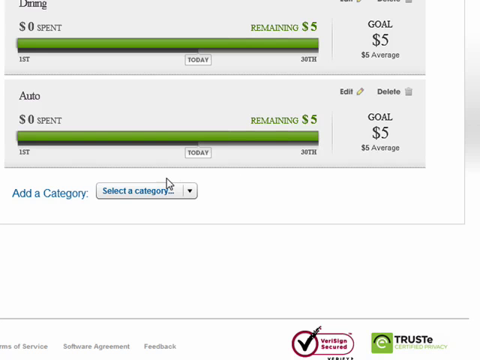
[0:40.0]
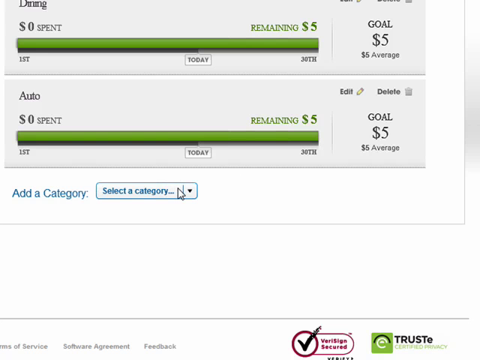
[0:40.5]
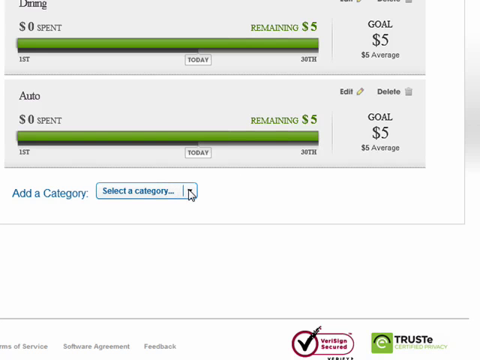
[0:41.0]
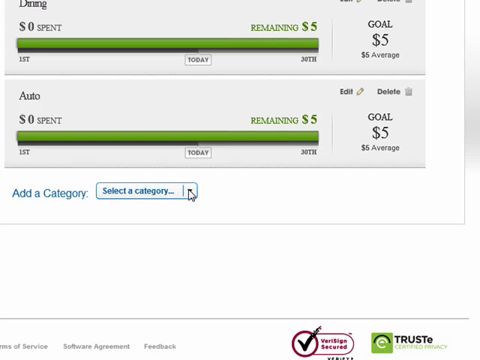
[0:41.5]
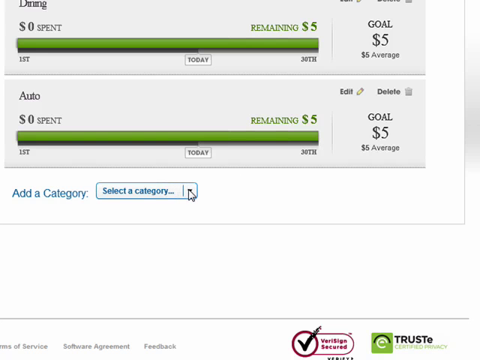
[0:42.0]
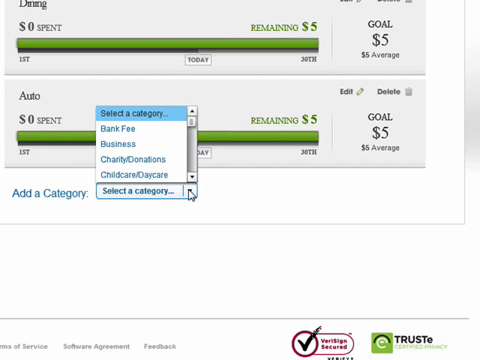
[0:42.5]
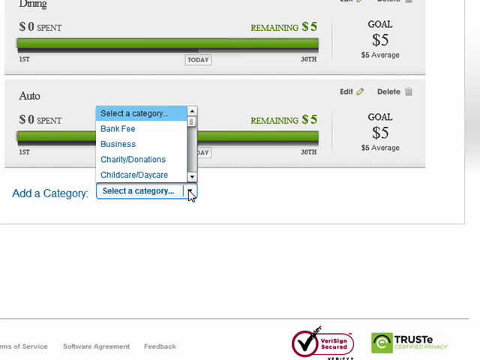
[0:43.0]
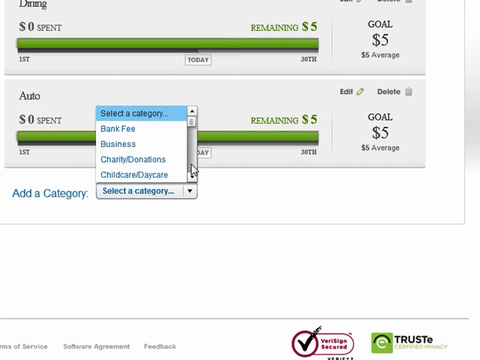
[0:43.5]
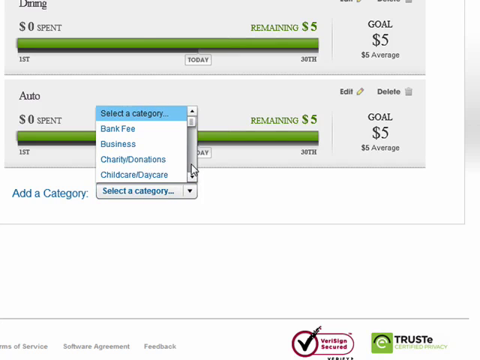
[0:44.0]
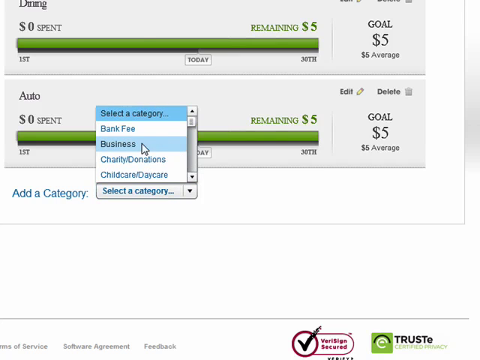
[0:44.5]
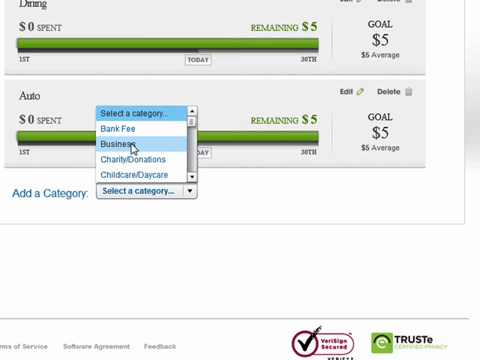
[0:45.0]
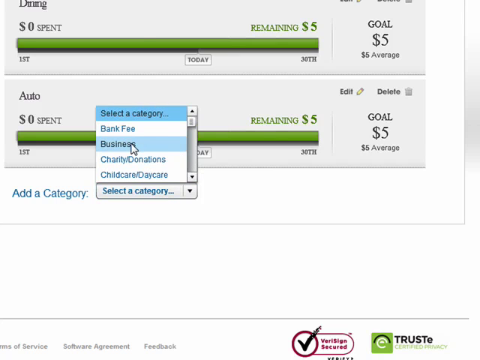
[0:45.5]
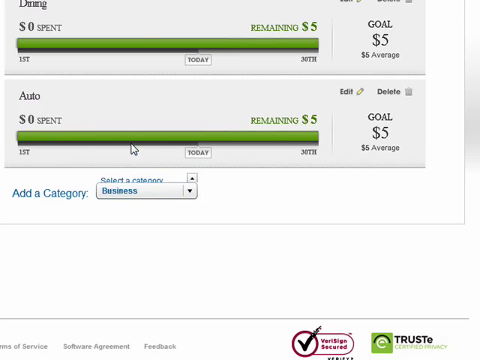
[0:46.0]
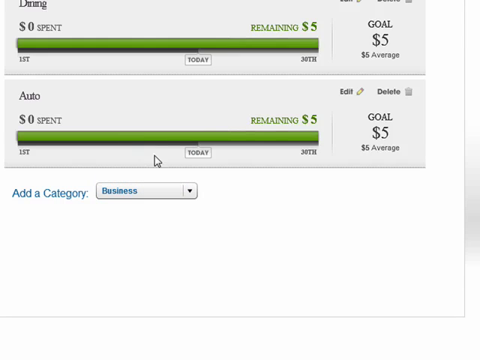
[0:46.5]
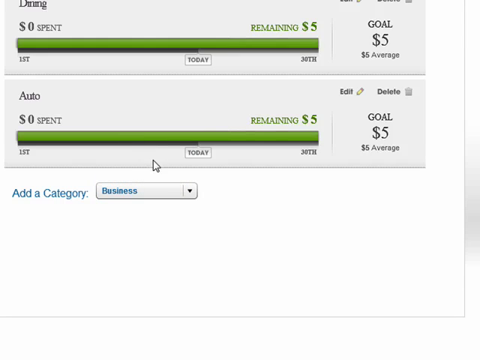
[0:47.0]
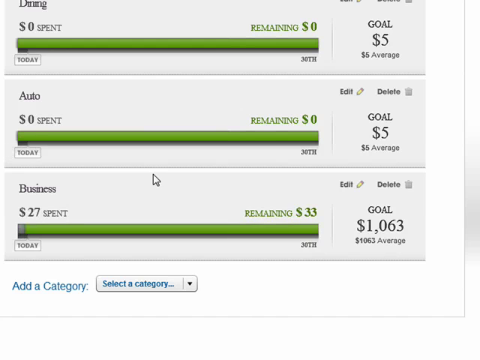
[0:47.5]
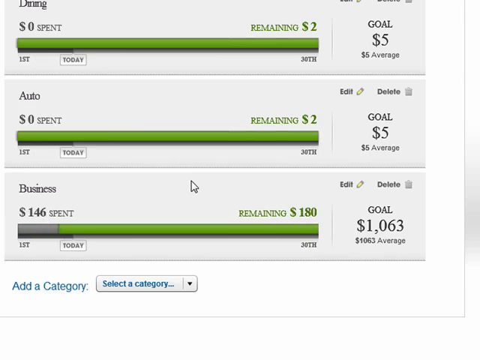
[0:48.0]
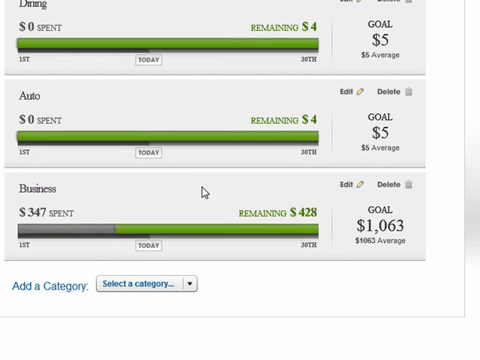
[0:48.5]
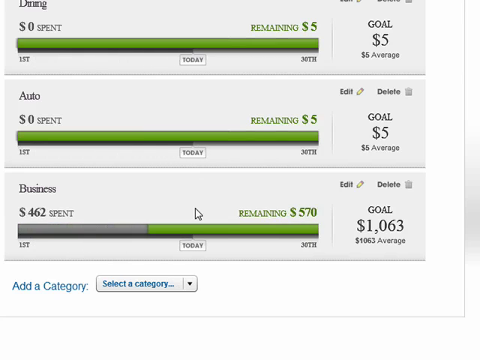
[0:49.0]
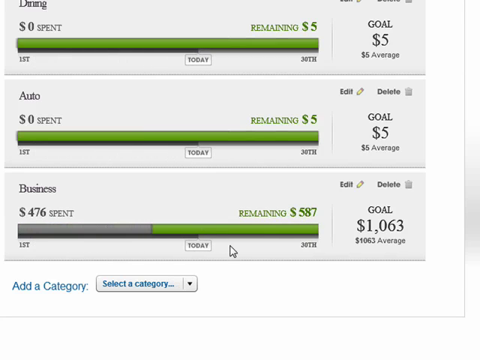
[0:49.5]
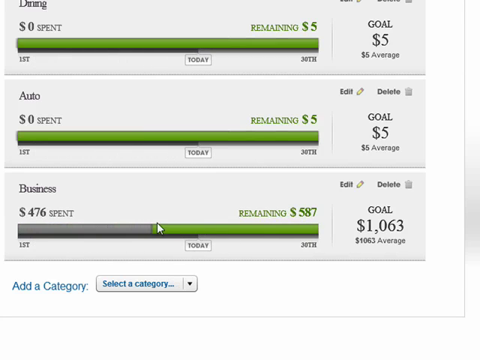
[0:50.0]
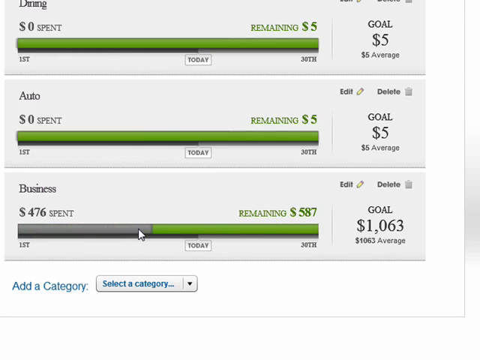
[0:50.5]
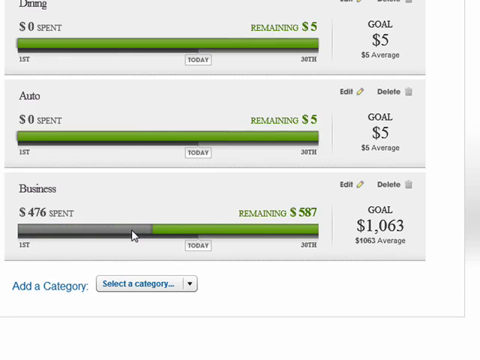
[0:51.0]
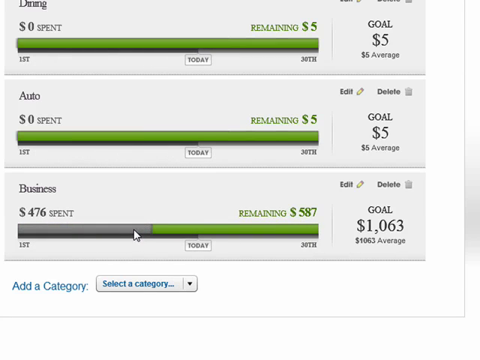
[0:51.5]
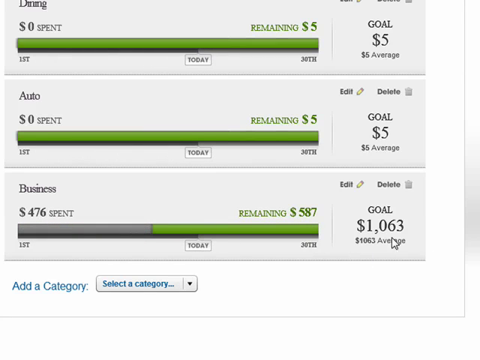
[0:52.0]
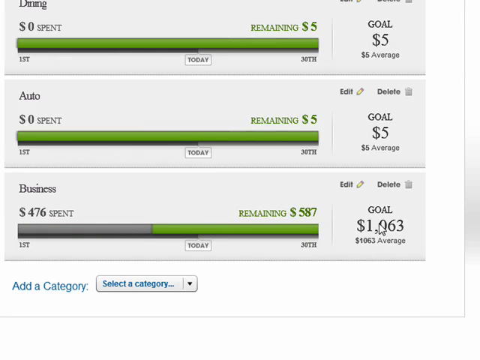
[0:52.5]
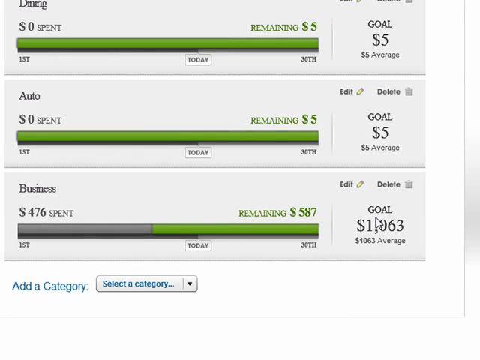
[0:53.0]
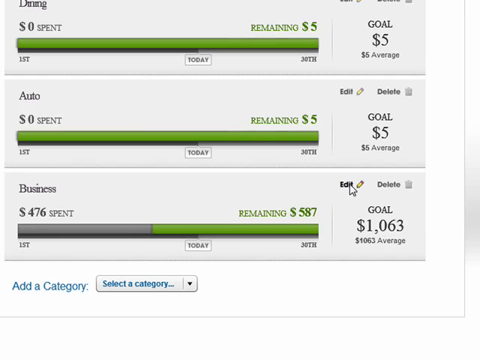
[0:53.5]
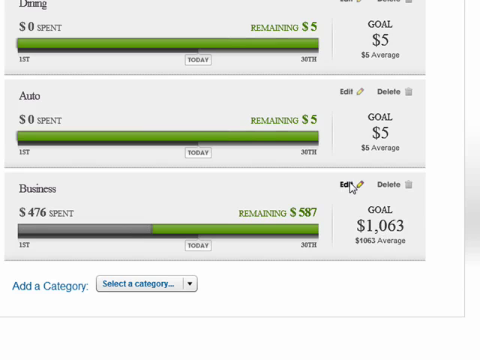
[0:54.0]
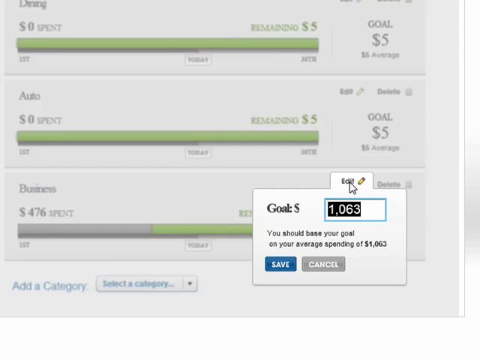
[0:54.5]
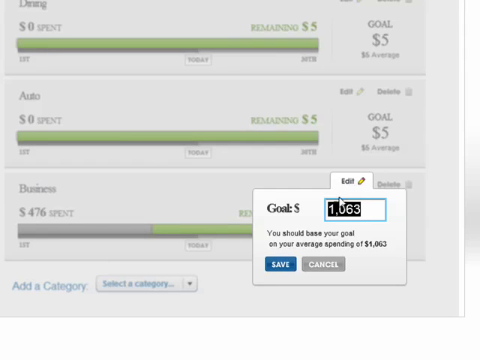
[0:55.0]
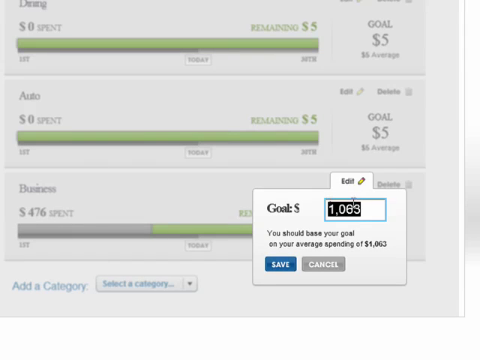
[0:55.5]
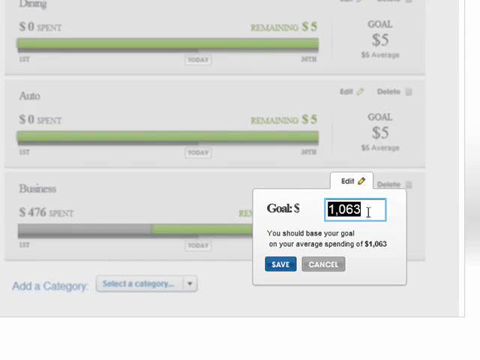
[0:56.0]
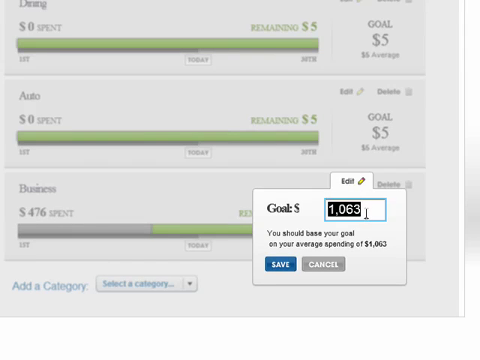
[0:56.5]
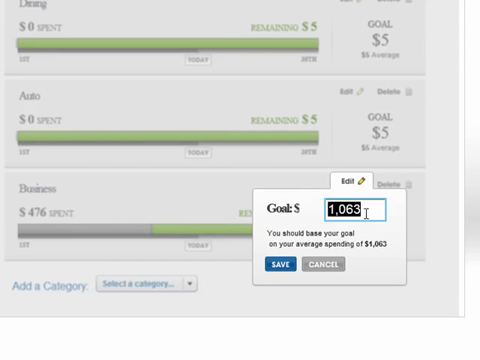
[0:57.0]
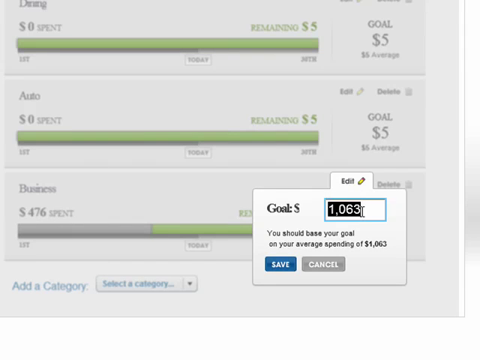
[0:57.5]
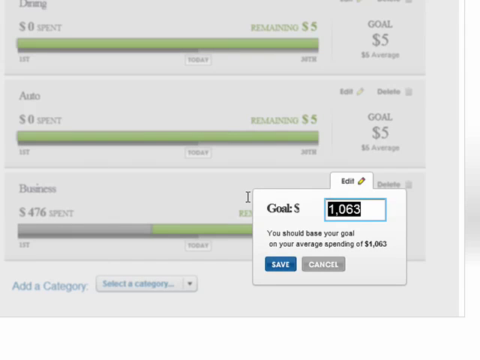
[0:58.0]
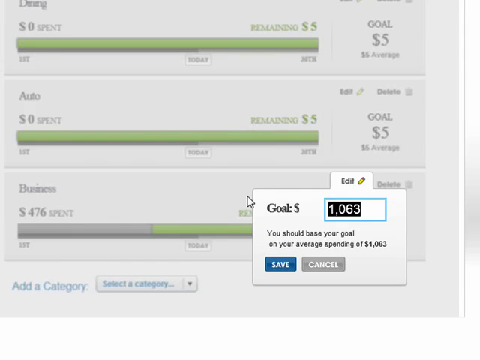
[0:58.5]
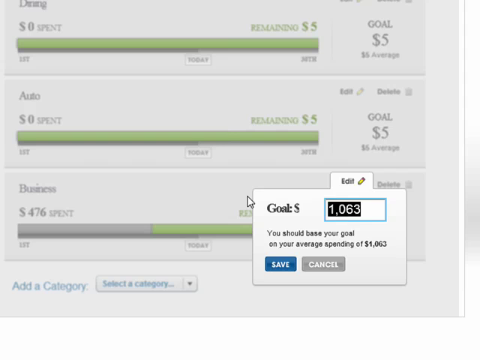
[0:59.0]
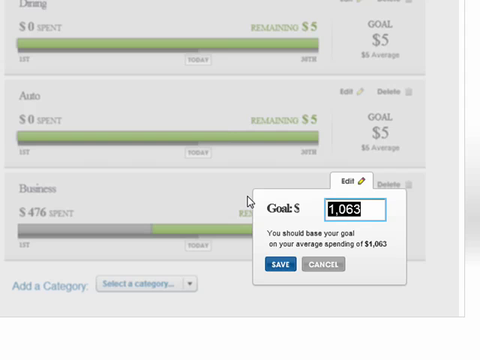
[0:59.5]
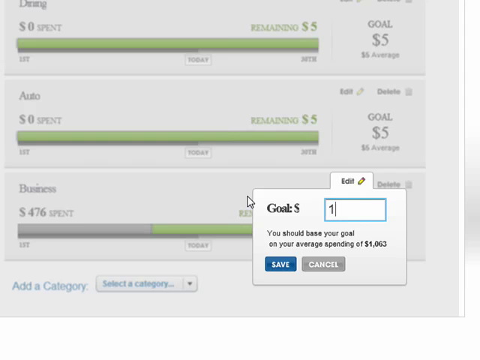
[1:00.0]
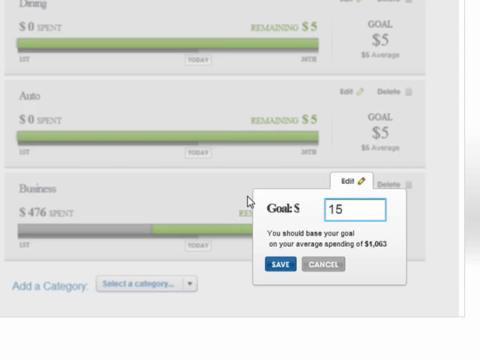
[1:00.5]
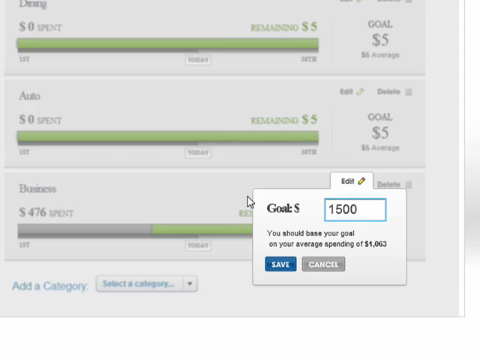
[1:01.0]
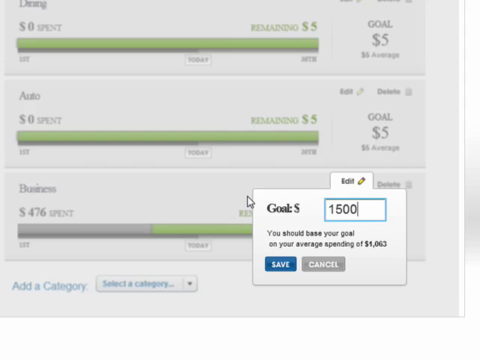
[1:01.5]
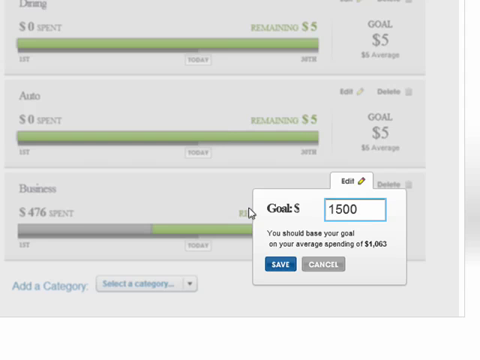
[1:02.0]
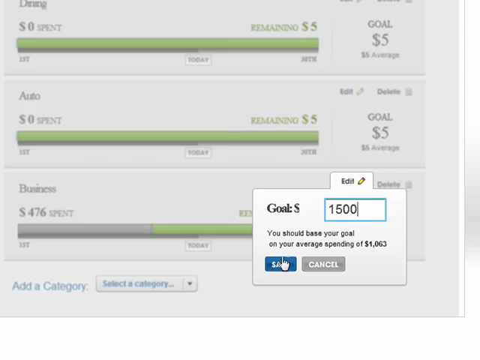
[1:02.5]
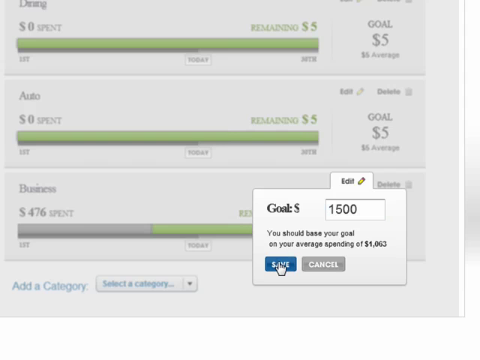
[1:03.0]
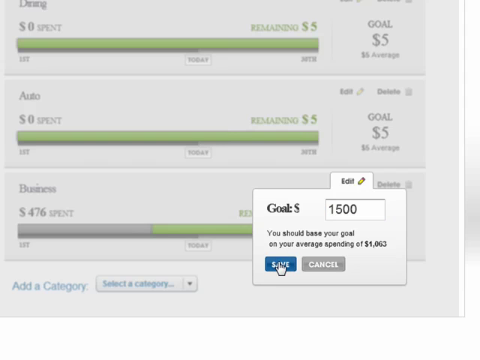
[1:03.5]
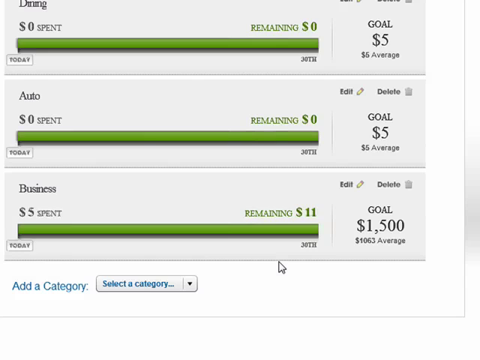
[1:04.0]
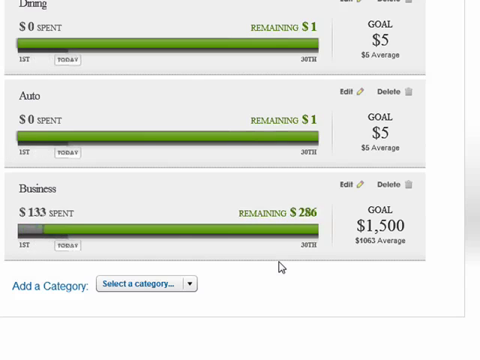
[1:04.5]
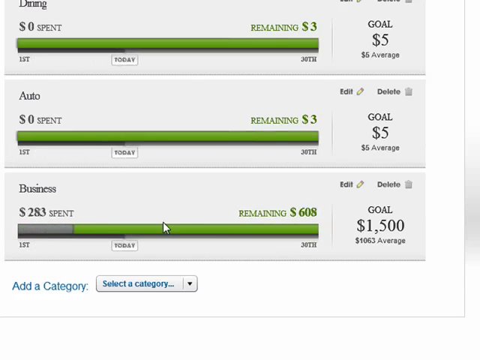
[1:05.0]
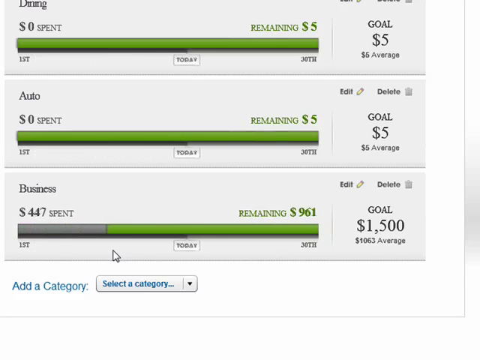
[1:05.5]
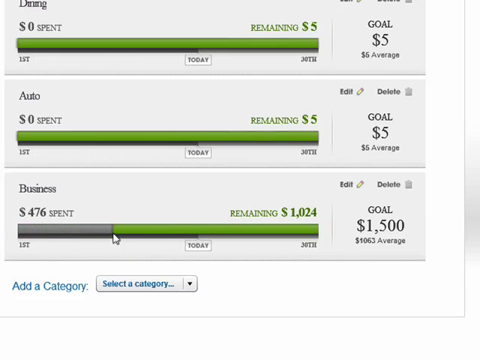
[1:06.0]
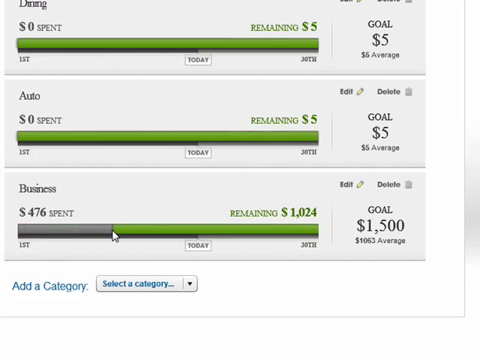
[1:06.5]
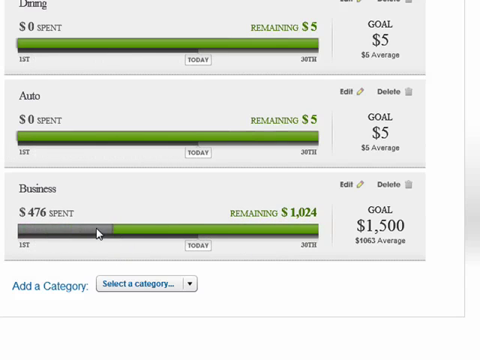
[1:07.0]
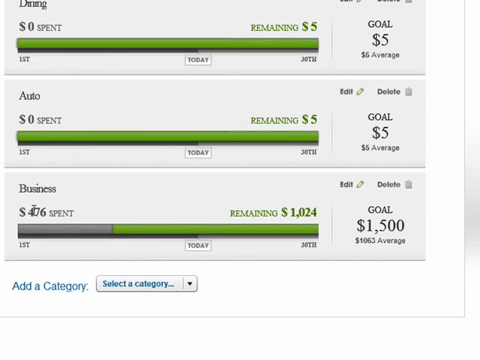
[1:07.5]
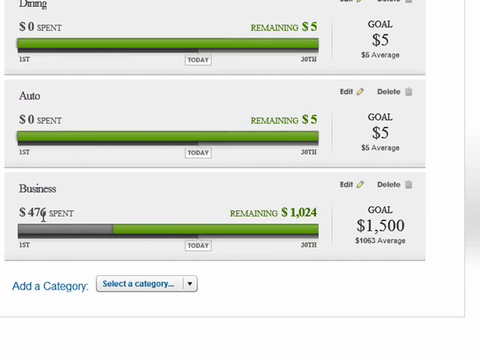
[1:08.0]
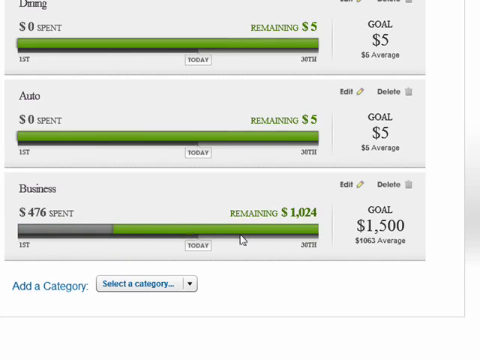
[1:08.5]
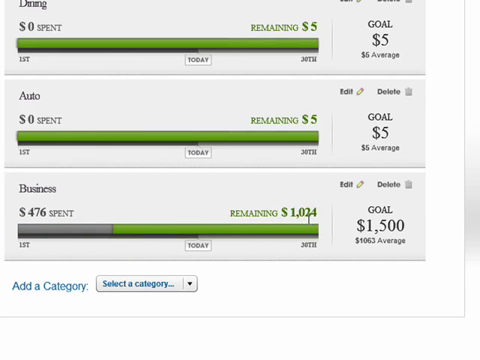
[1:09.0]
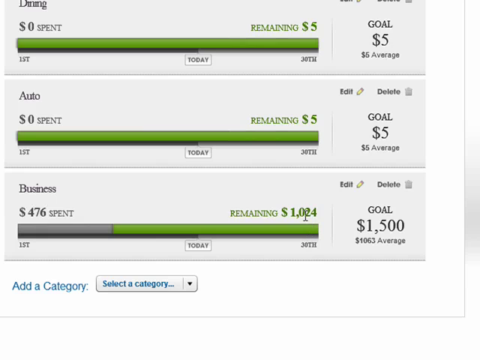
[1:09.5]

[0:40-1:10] The same section remains on screen, now with two new categories: dining, with a goal of $5, and auto, with a goal of $5. Below is "add a category" with a drop-down triangle. The cursor selects the drop-down, revealing a list of categories whose top two are "bank fee" and "business". The user clicks Business, and a business category appears with data filled in automatically: spent $476, remaining $587, and a goal of $1,063 on the right-hand side. The user clicks the edit button, highlights the total, changes it to 1500, and clicks the blue save button on the left-hand side. The remaining amount now reads $1,024. In the bar, the spent portion is gray and the remaining portion is green.